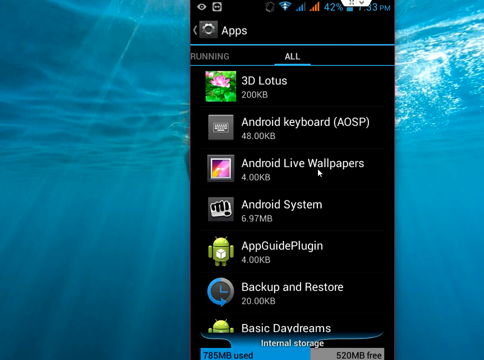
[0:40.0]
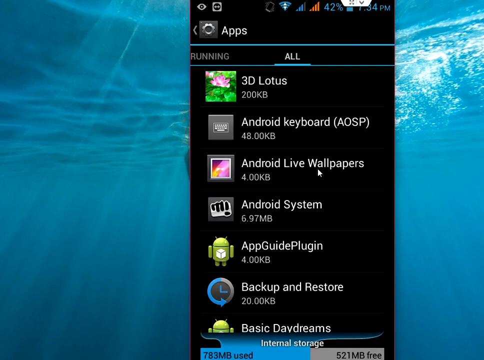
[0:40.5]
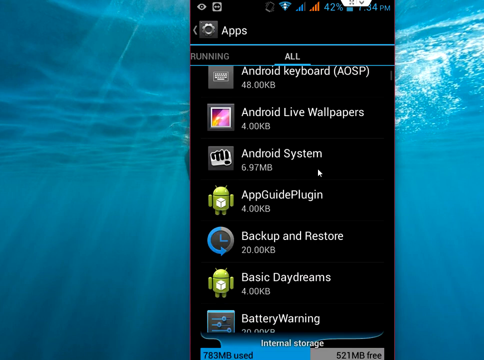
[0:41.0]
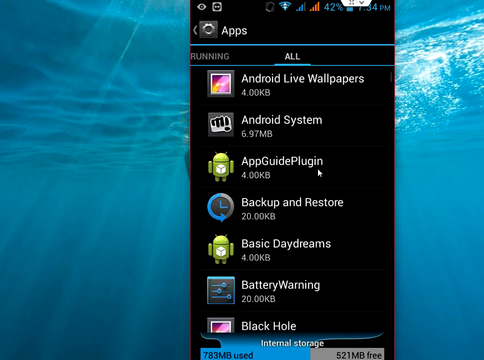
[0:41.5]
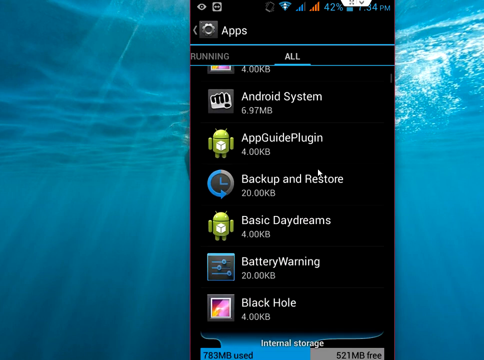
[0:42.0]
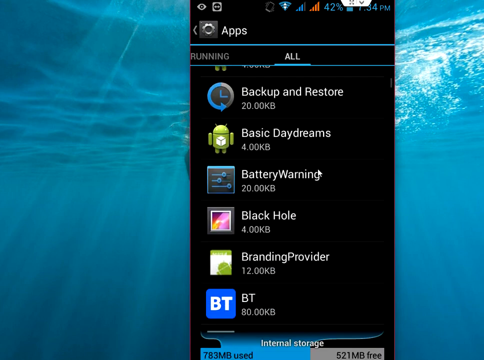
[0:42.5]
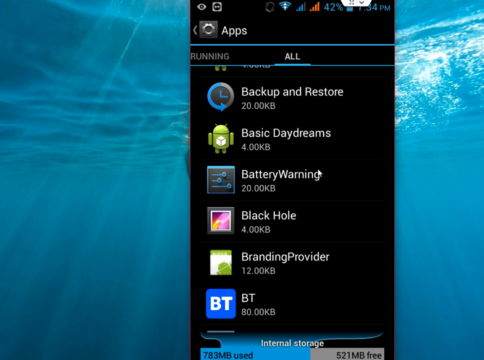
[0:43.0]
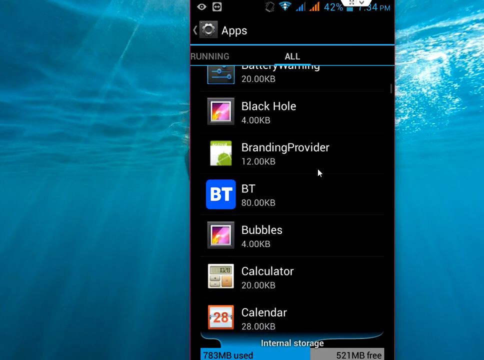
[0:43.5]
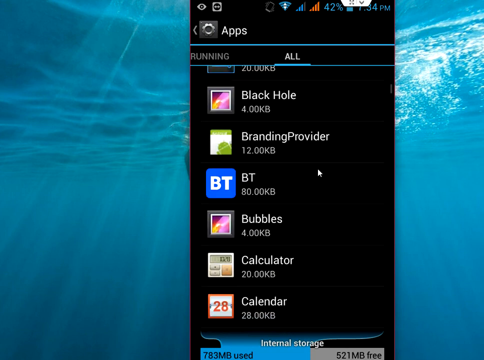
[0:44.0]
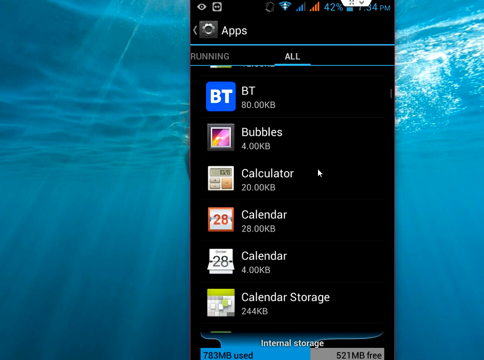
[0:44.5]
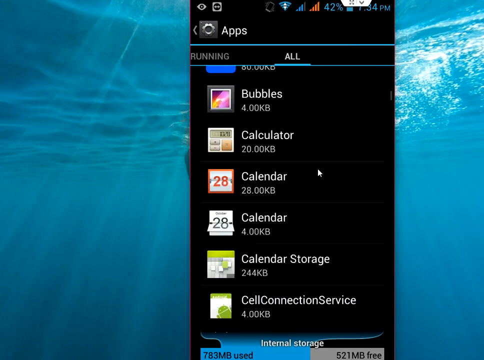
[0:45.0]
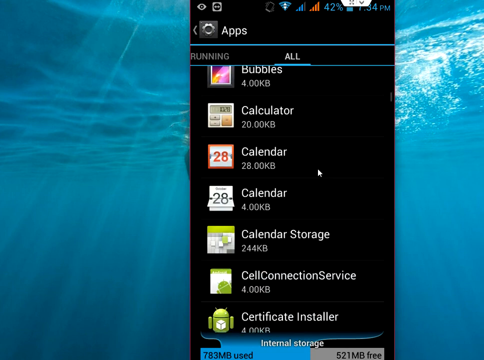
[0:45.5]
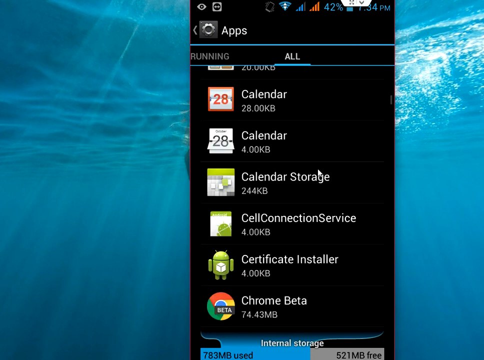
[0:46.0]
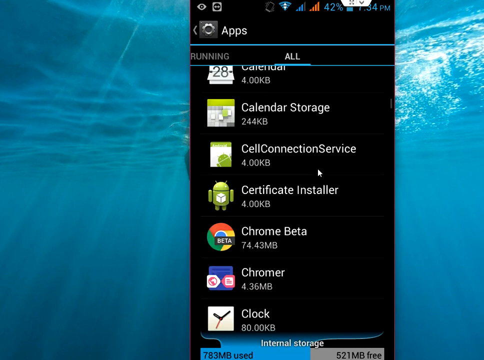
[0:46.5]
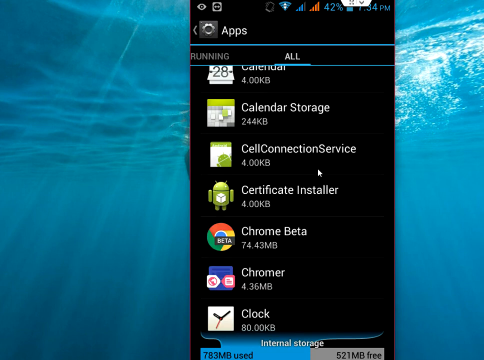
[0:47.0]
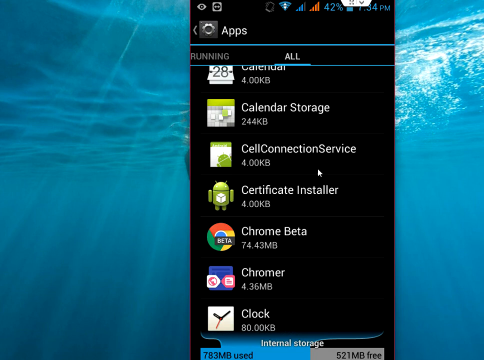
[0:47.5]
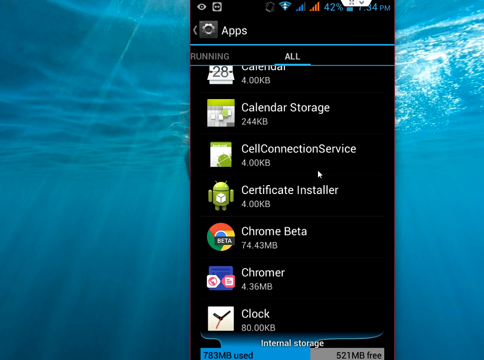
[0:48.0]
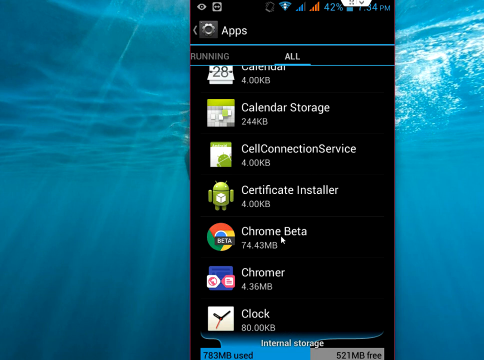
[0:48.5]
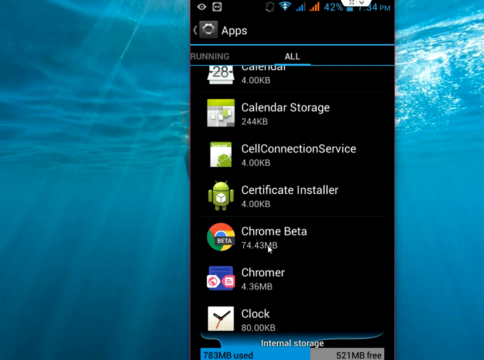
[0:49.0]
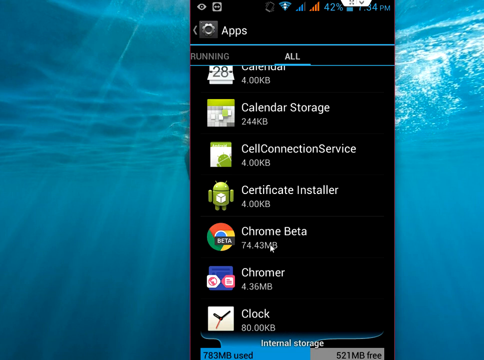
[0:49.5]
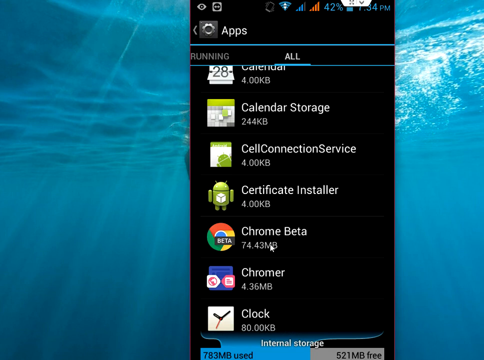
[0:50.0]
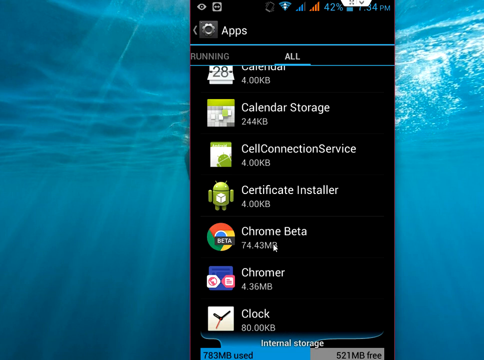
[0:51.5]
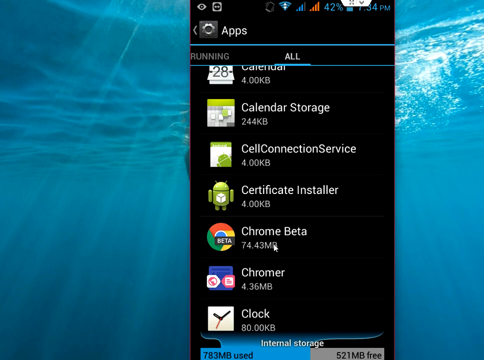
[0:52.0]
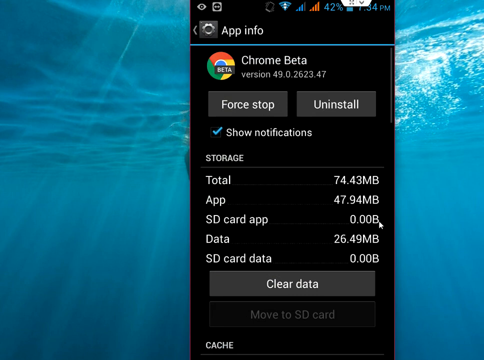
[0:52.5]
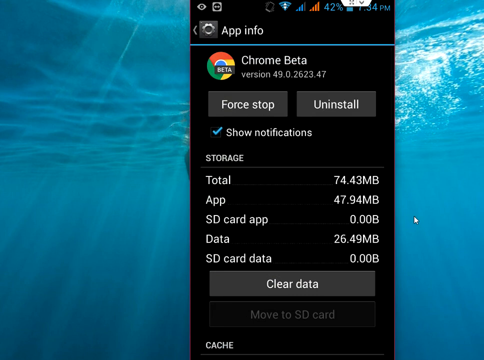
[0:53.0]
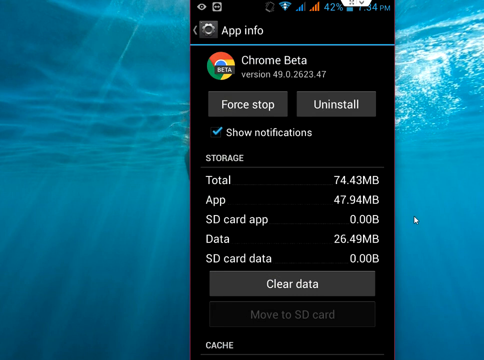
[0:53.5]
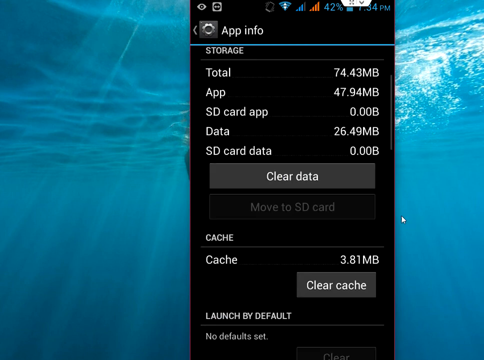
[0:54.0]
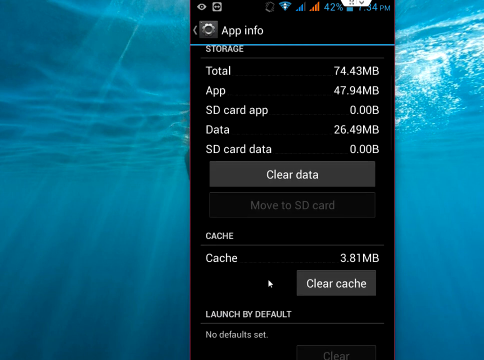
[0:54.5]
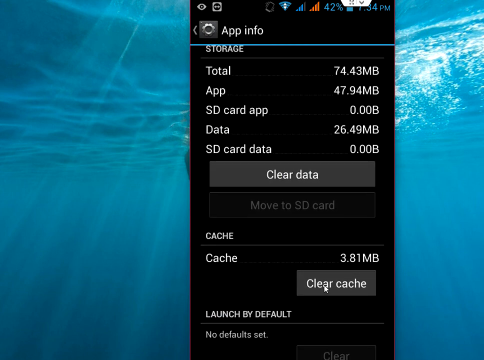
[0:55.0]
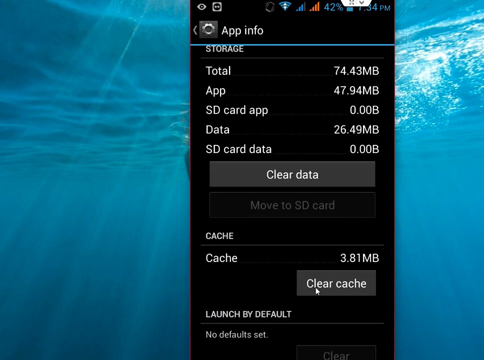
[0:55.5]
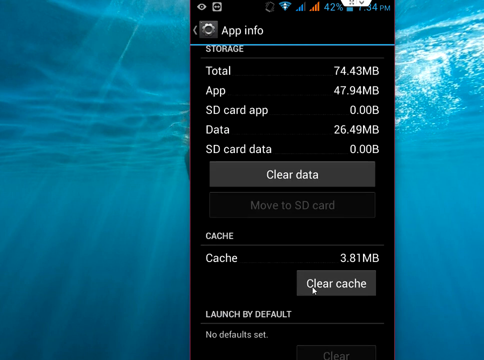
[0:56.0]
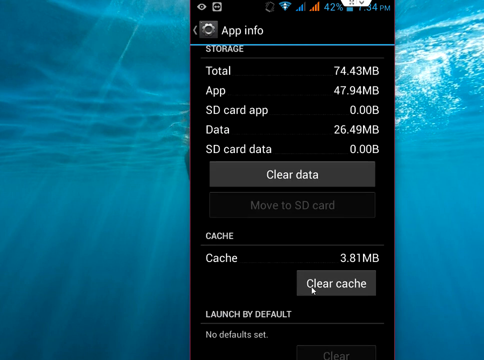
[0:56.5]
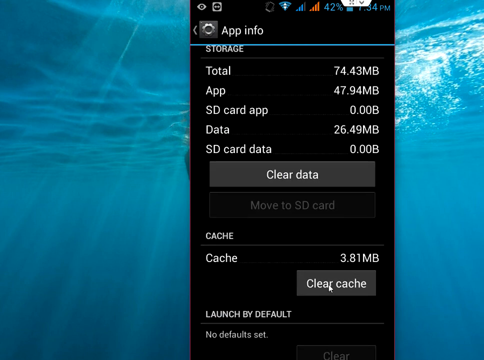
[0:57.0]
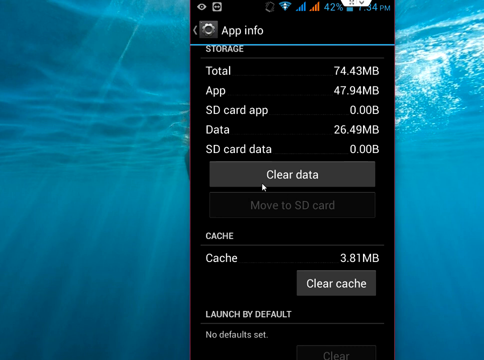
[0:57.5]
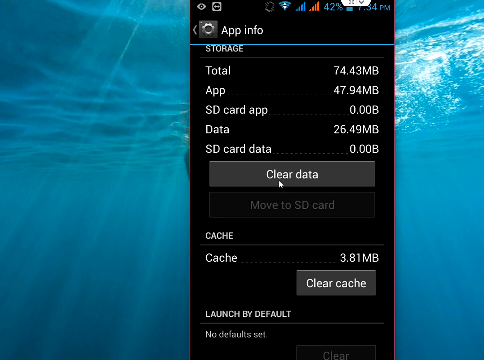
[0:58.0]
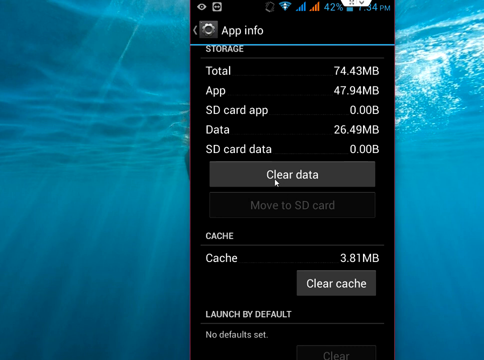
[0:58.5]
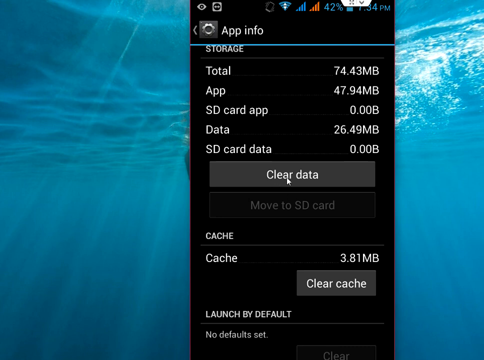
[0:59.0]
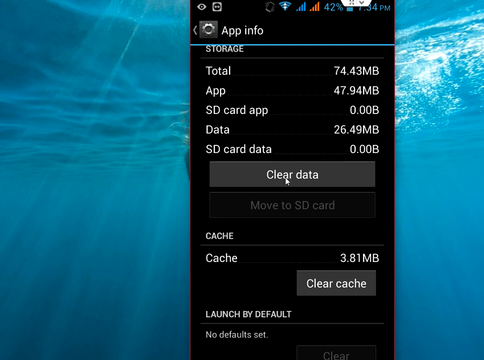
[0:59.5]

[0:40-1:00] In the all section, the user scrolls down through the apps, which are listed in alphabetical order, passing through the A's, the B's and the C's. Under C, the user finds Chrome beta and clicks on it. The screen shows Force Stop and Uninstall buttons at the top, along with storage information and Clear Data and Clear Cache buttons, and the user clicks on Clear Cache and Clear Data. The screen has a very dark coloration, with icons in various colors and descriptors in white text. The background stays completely static.